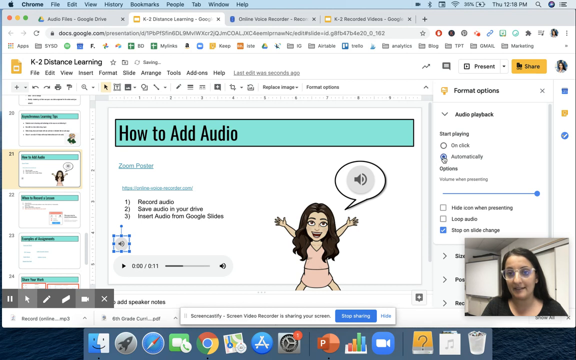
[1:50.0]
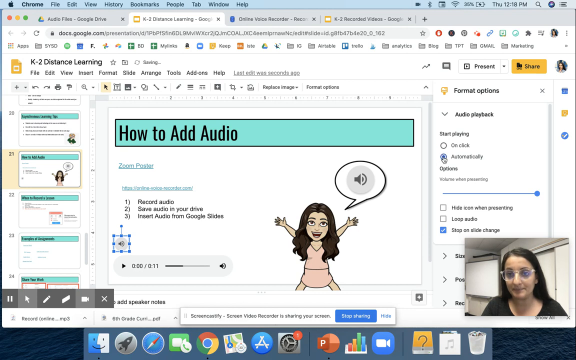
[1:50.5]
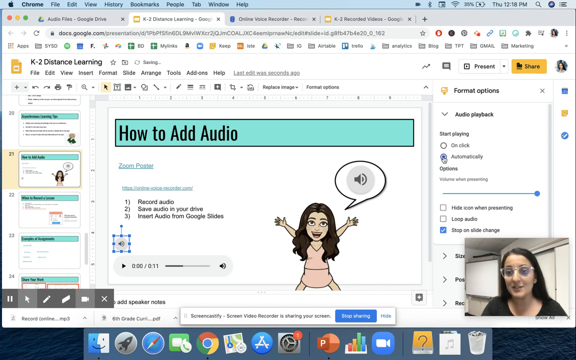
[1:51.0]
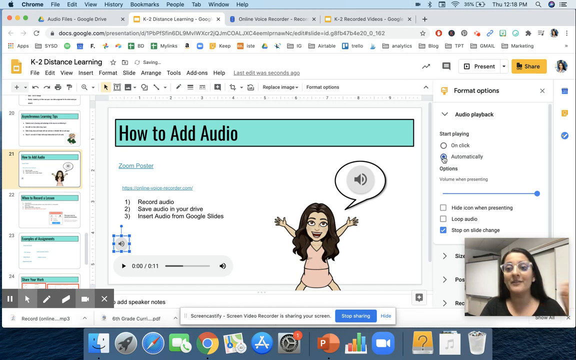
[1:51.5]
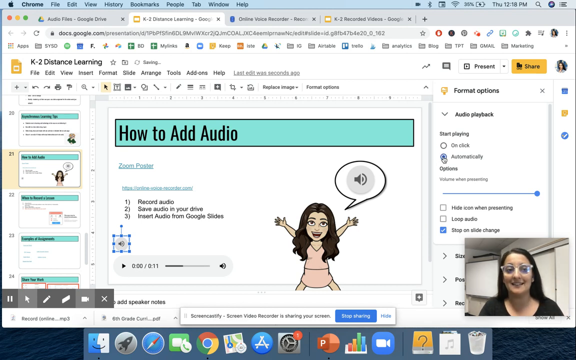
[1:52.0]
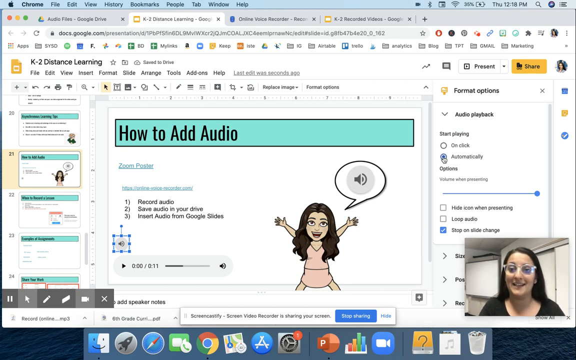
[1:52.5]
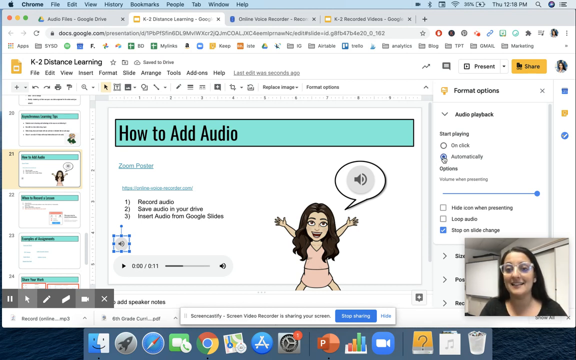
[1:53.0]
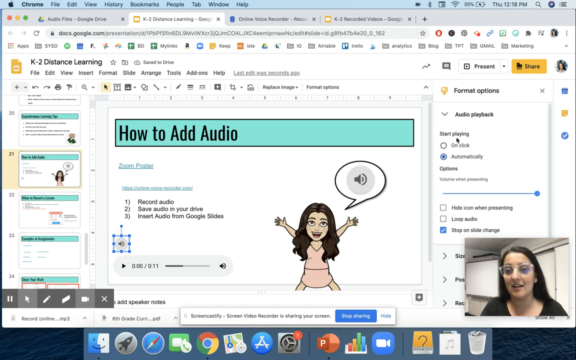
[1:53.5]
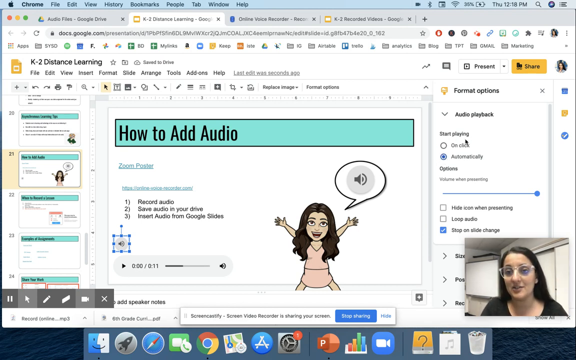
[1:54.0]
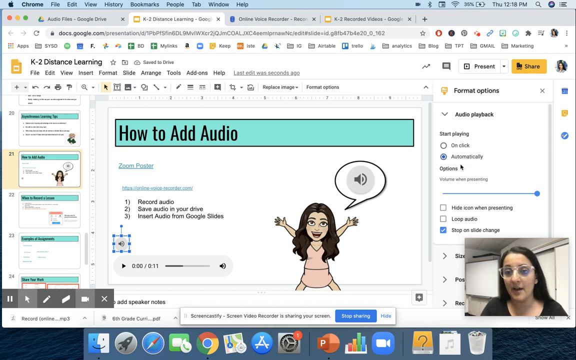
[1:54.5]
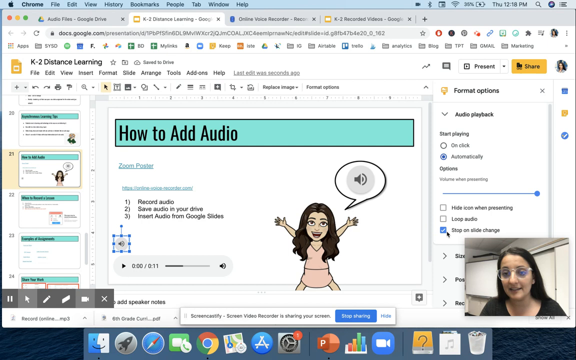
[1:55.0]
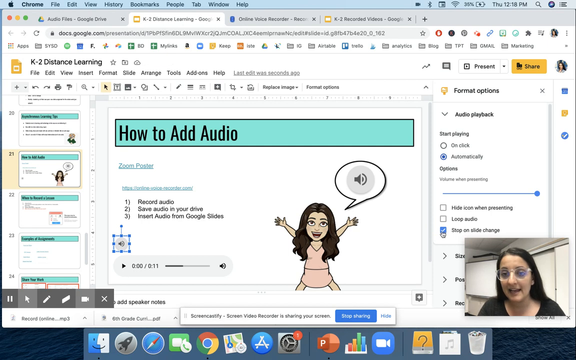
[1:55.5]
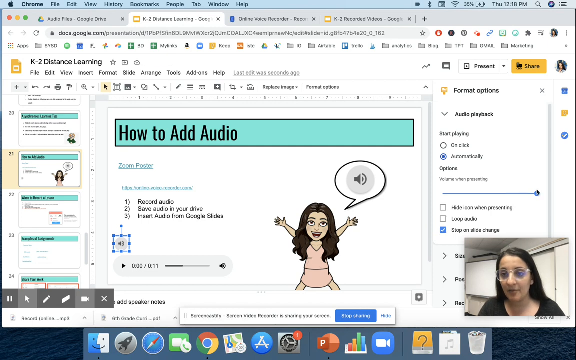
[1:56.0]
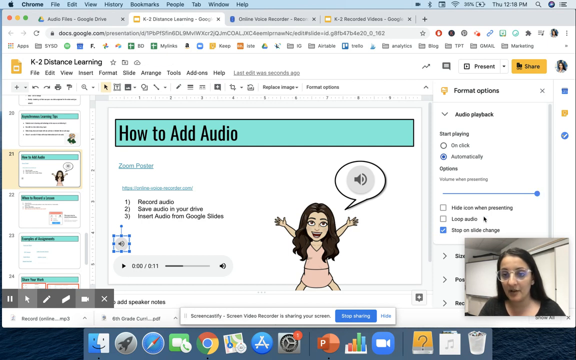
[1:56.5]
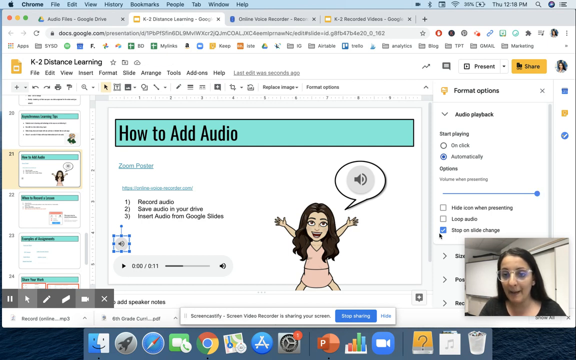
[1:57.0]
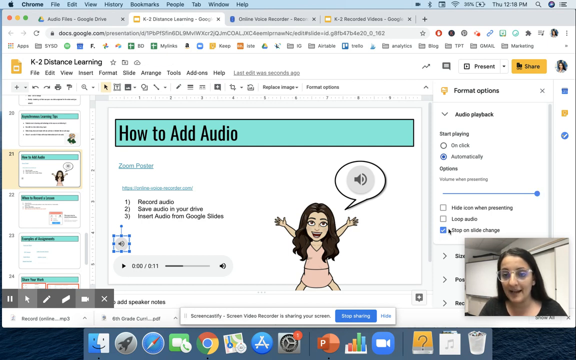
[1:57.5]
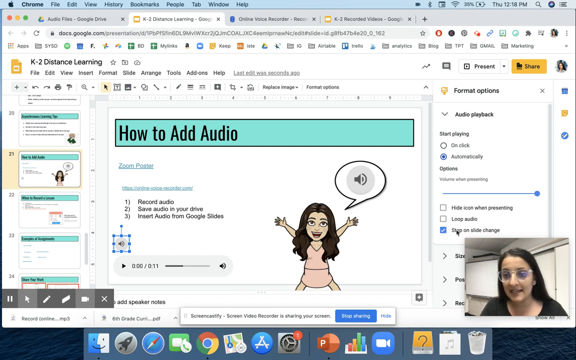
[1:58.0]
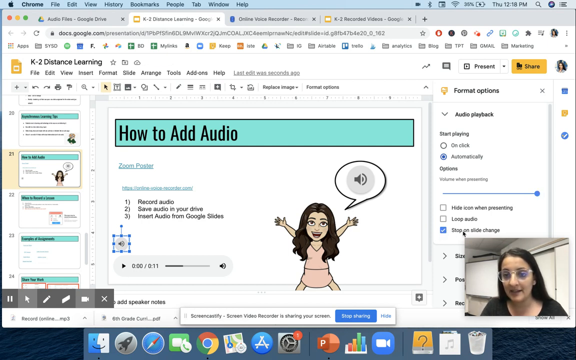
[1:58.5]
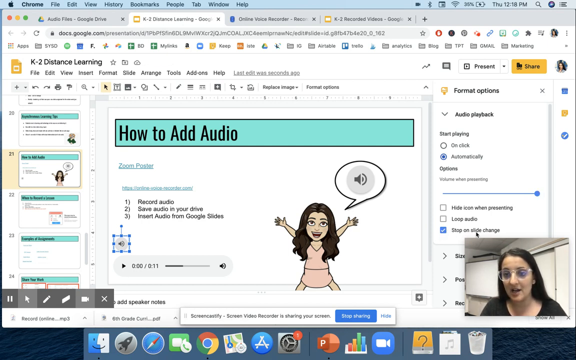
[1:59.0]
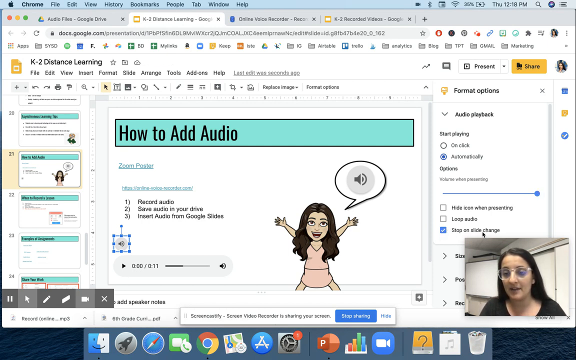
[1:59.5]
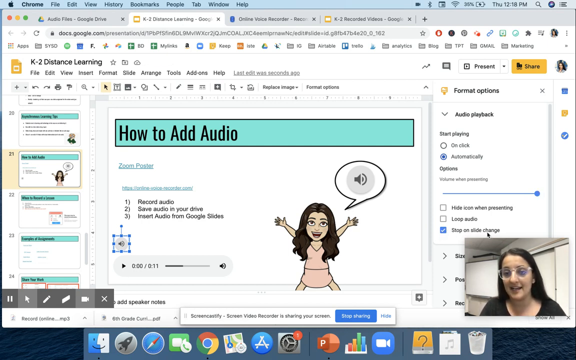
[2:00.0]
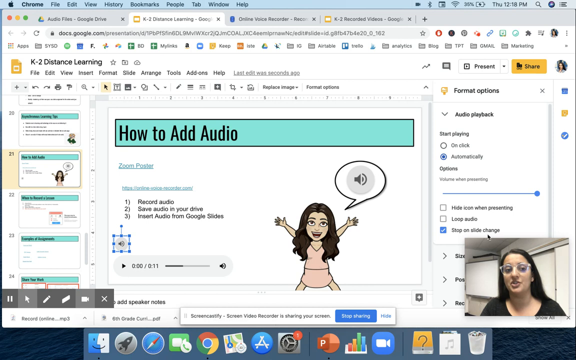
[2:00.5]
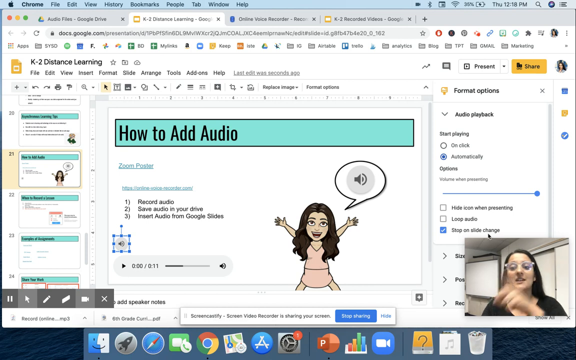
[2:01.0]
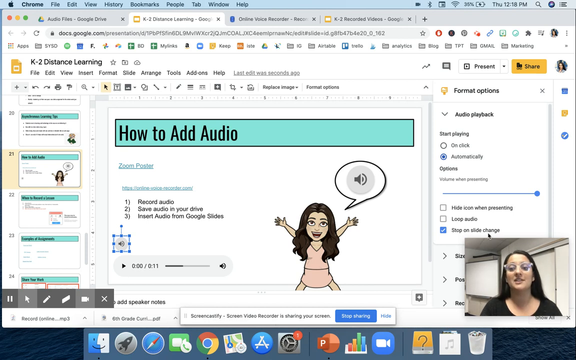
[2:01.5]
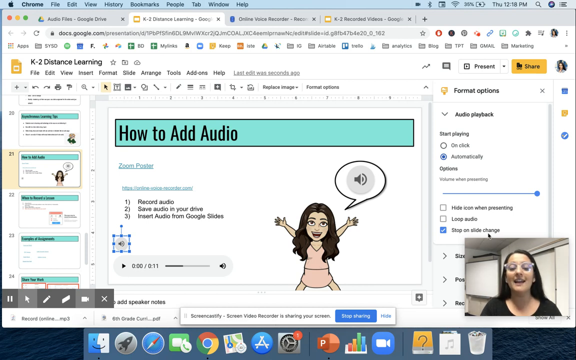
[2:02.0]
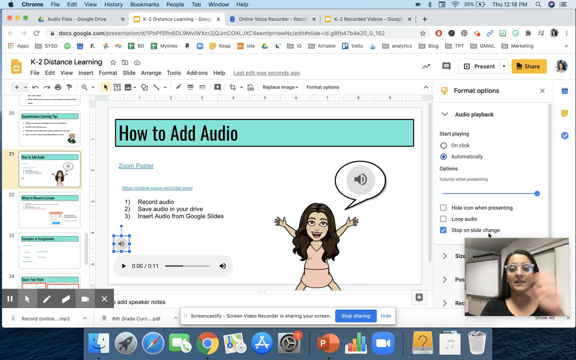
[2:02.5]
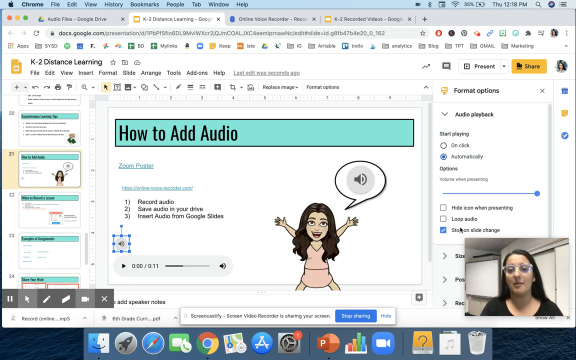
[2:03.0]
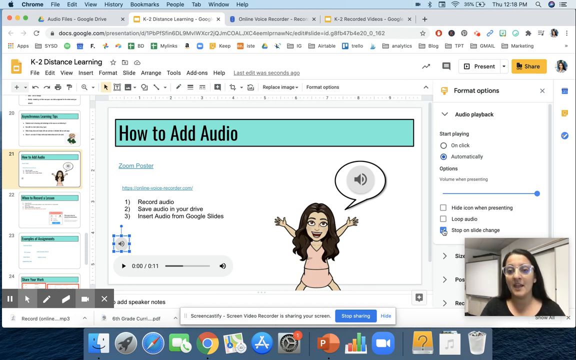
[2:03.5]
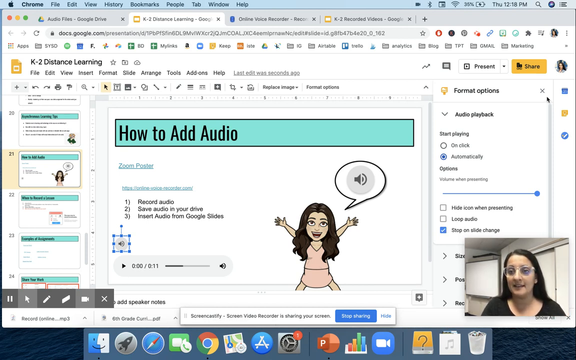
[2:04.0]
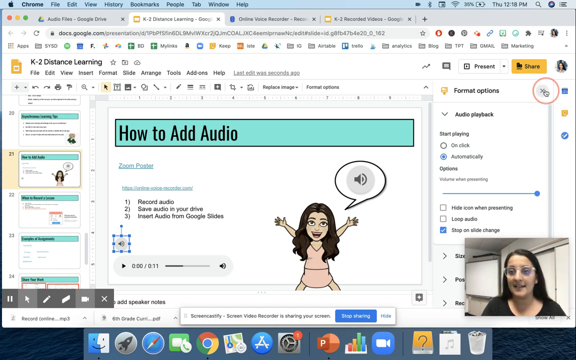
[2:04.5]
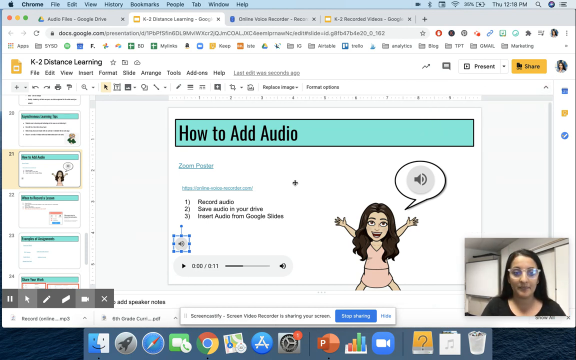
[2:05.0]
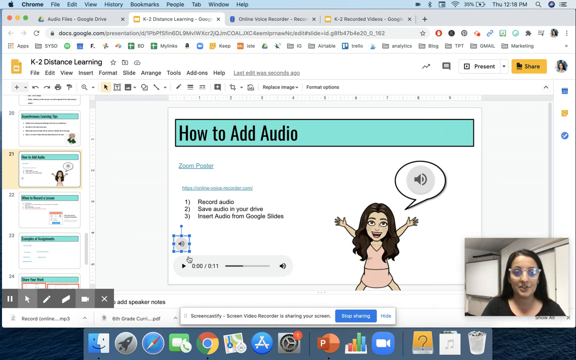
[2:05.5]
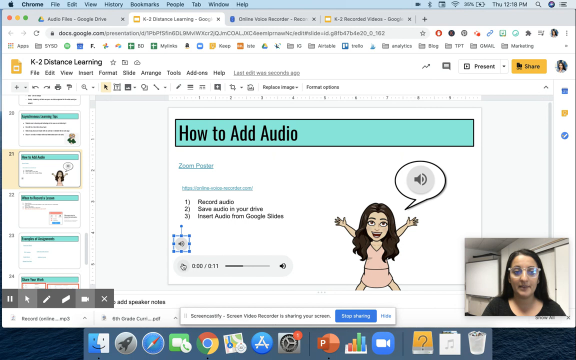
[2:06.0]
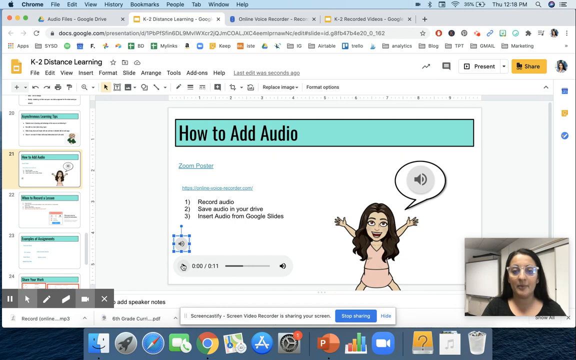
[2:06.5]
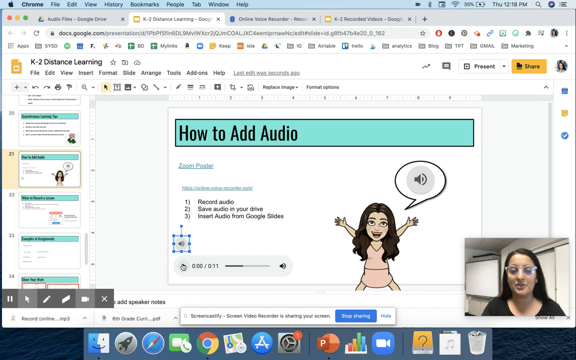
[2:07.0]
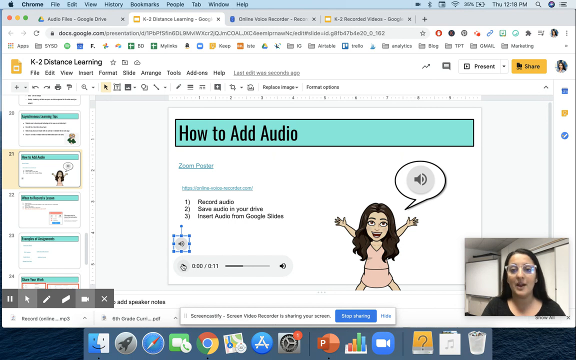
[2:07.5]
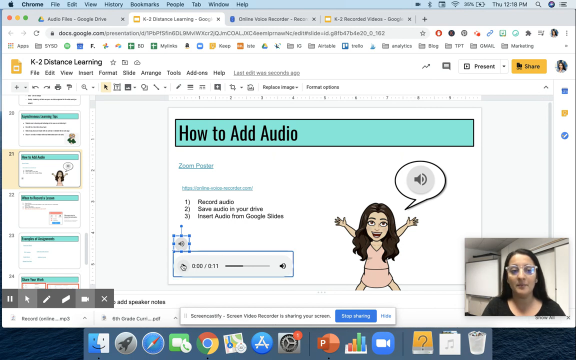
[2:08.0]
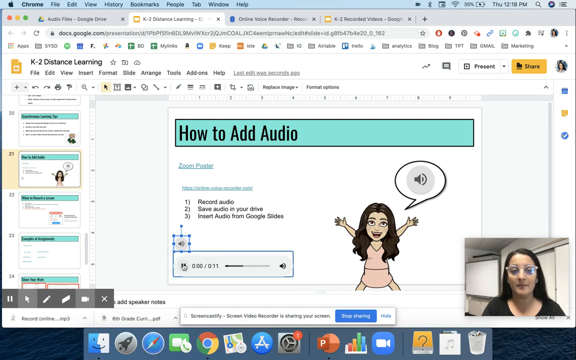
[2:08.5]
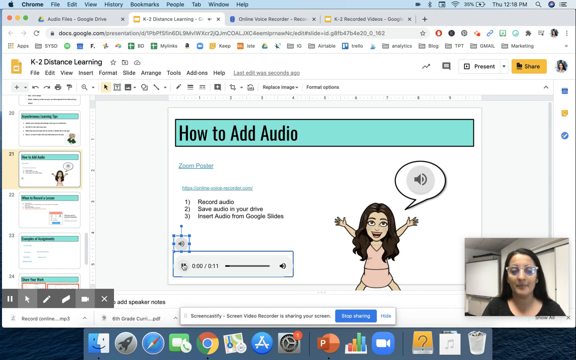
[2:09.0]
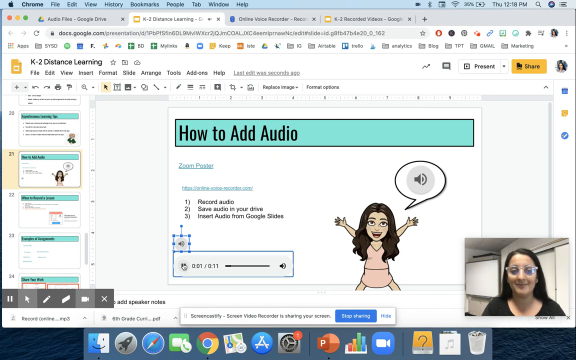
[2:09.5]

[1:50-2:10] The teacher, a woman in her mid to late 20s, streams herself in the bottom right-hand corner. She wears clear glasses and a dark shirt and has long brown hair, and she appears to be teaching a course on how to add audio. She navigates the right sidebar under the format options for the audio just added to the title page, titled "how to add audio." Having clicked on automatically, she hovers over each of the different options, presumably talking through what they do and how to use them.